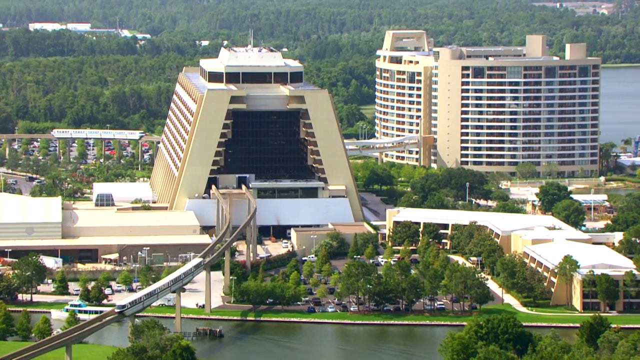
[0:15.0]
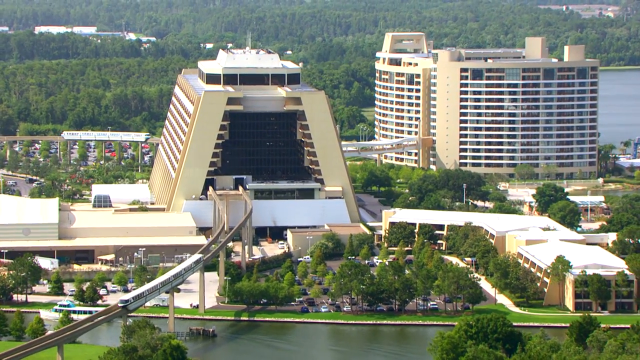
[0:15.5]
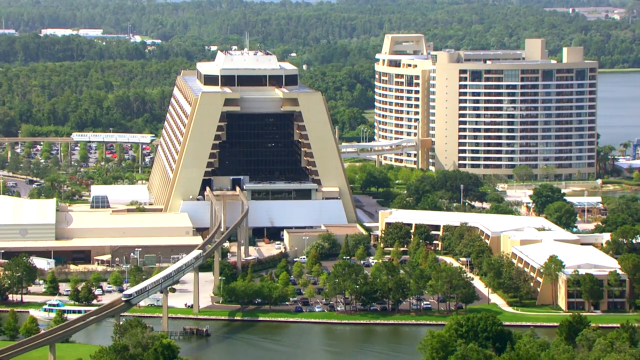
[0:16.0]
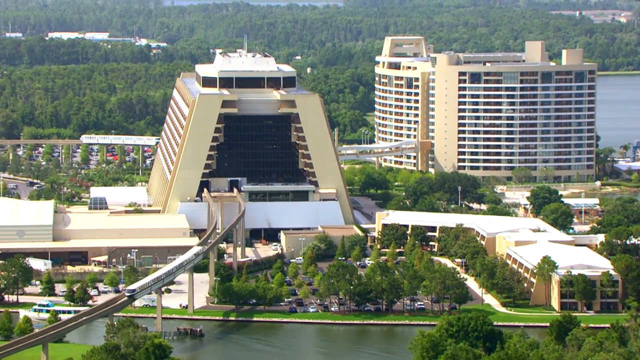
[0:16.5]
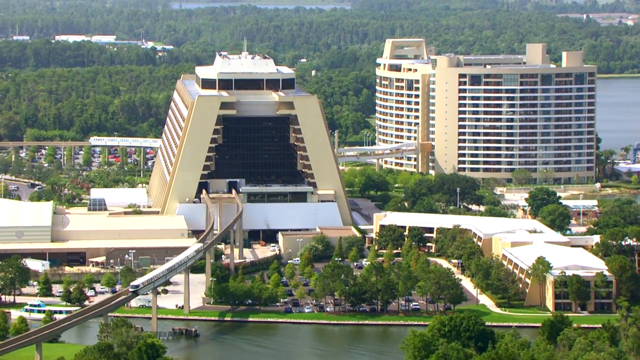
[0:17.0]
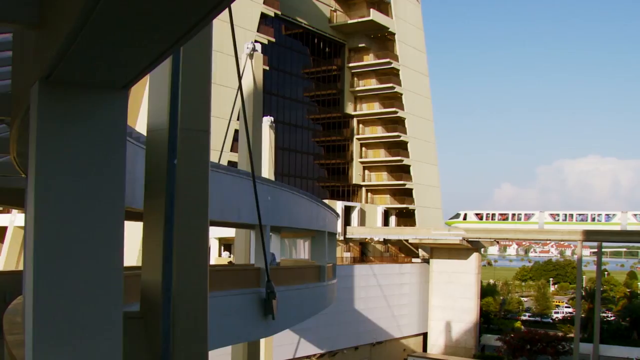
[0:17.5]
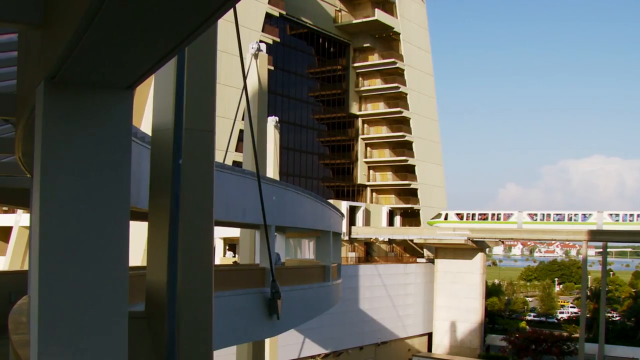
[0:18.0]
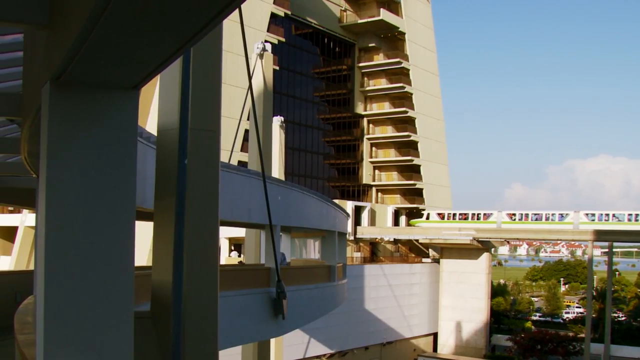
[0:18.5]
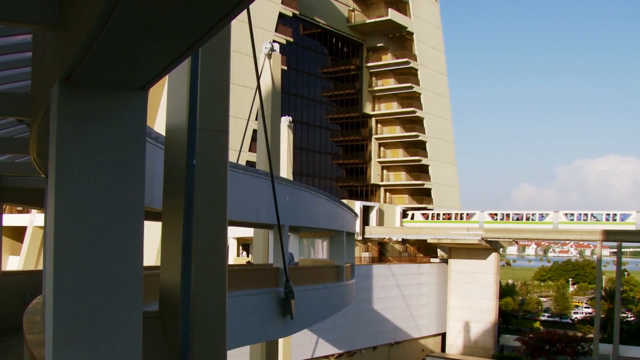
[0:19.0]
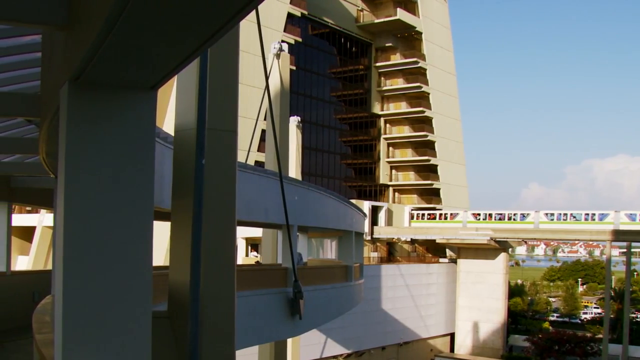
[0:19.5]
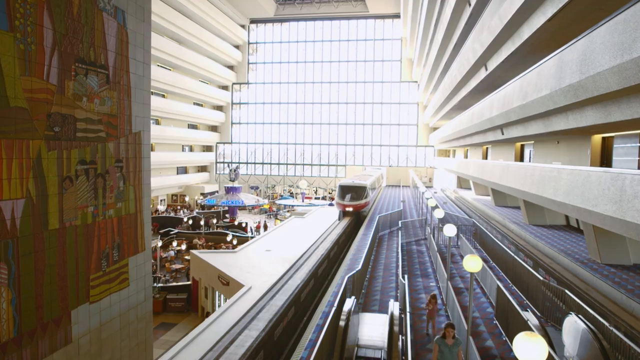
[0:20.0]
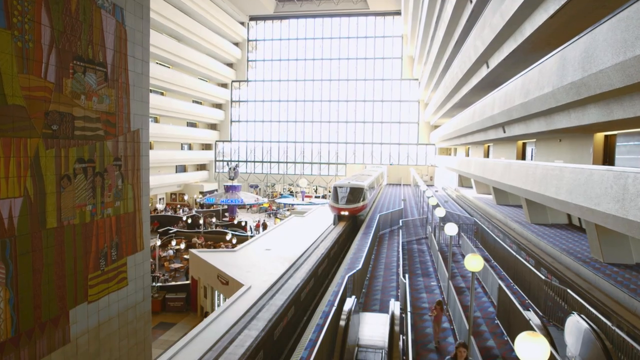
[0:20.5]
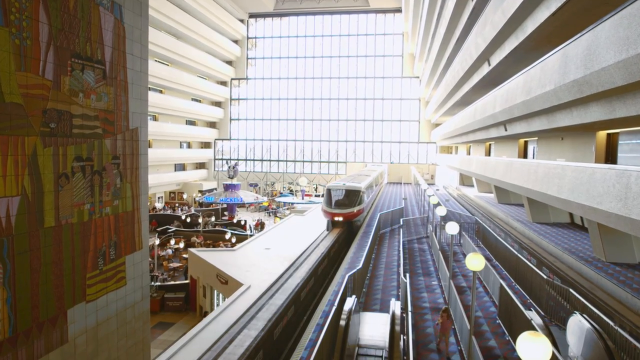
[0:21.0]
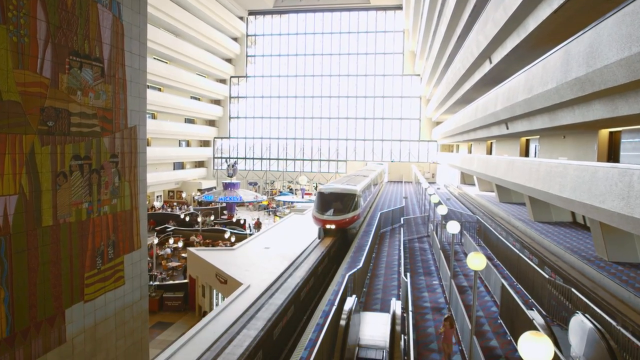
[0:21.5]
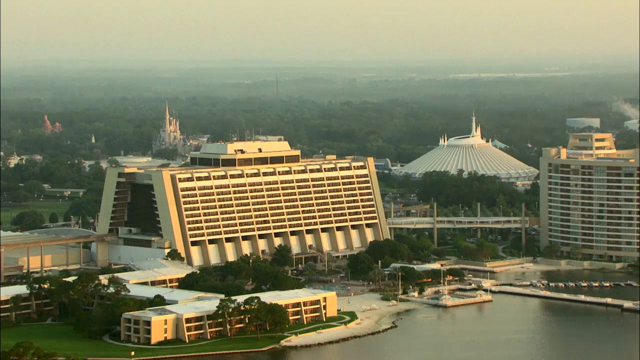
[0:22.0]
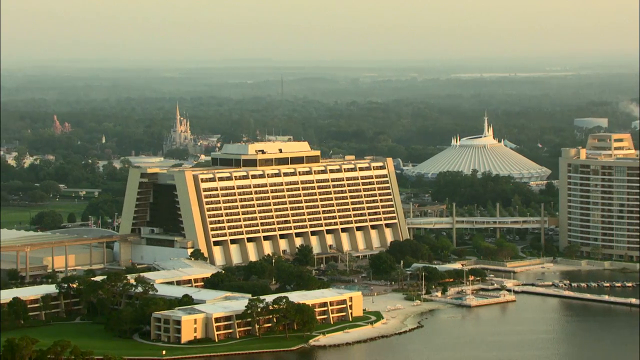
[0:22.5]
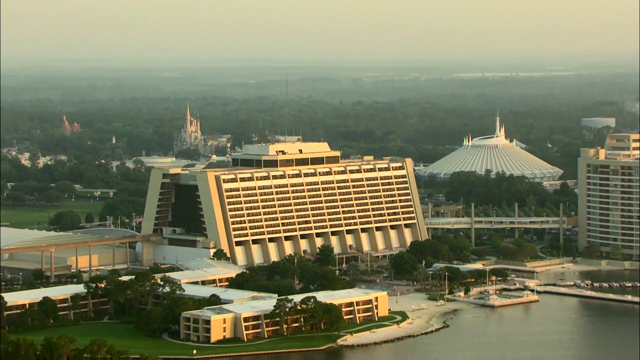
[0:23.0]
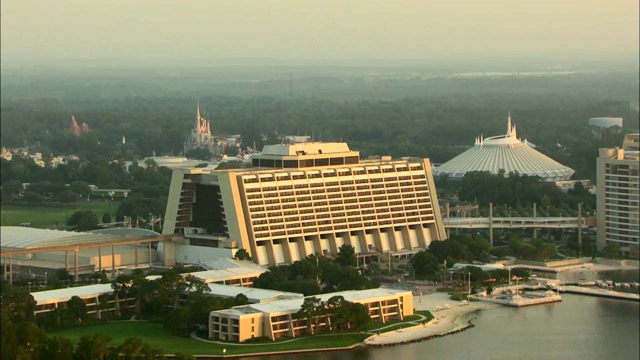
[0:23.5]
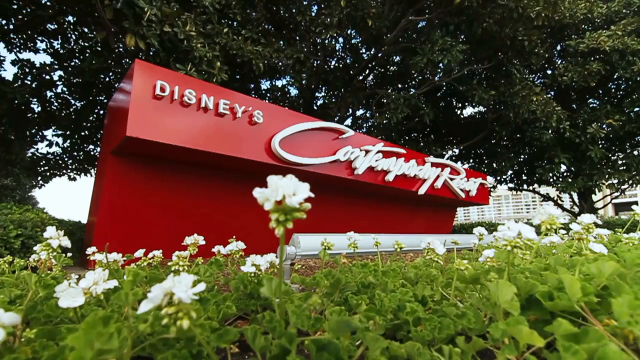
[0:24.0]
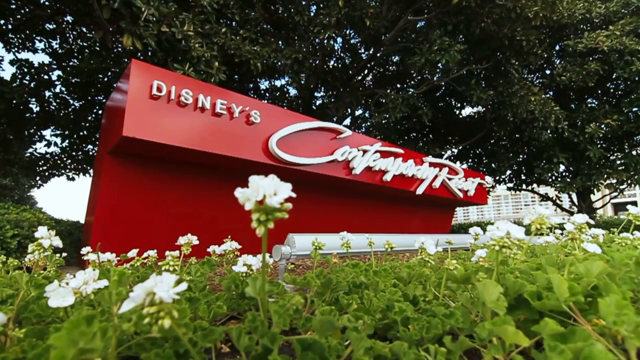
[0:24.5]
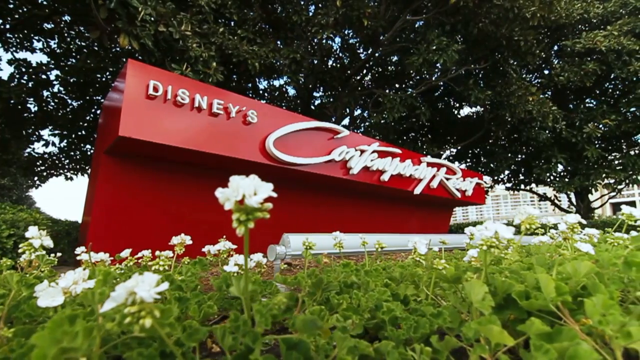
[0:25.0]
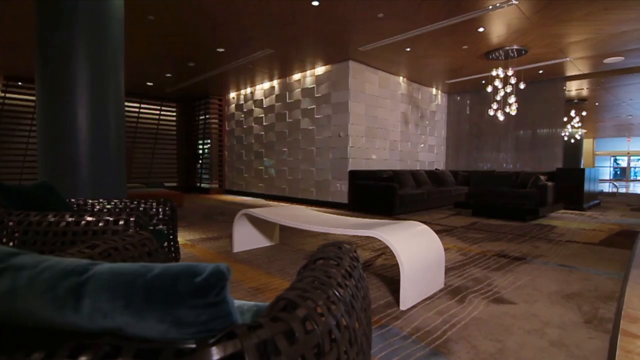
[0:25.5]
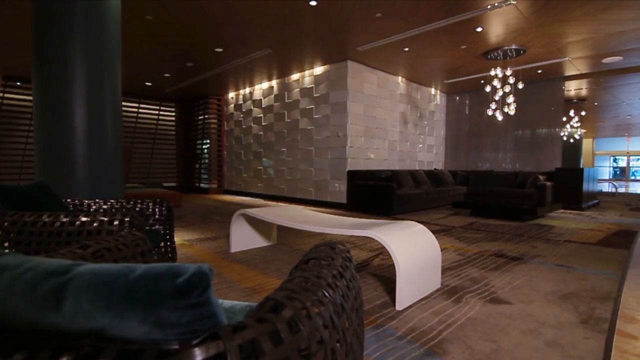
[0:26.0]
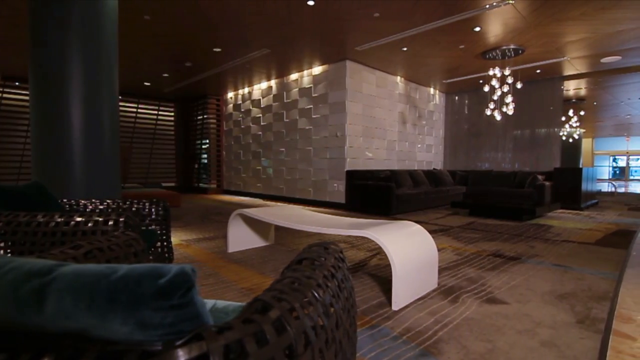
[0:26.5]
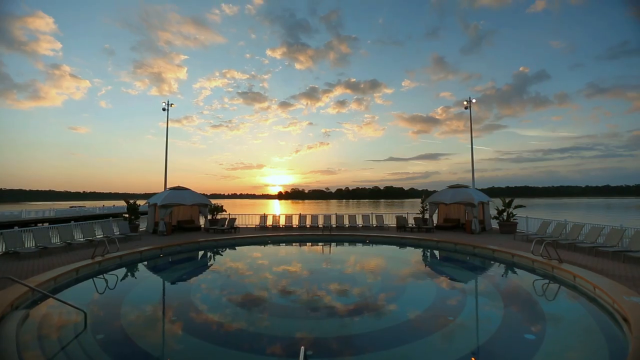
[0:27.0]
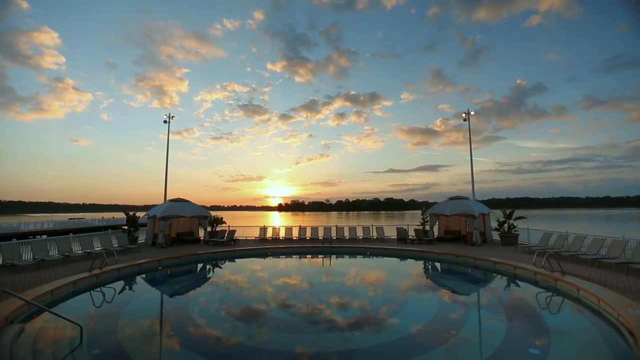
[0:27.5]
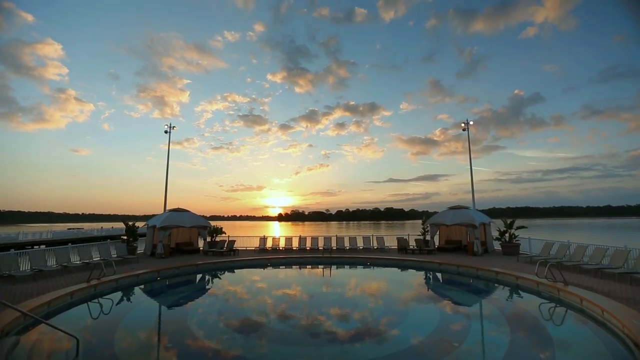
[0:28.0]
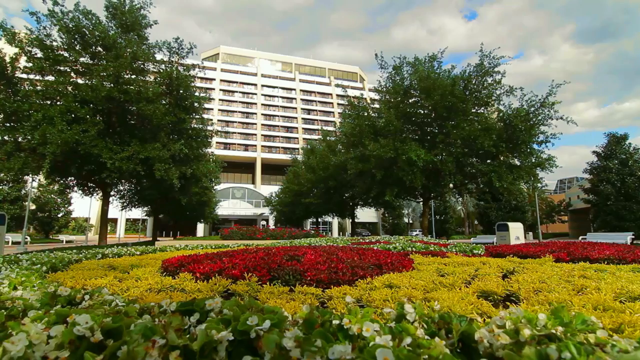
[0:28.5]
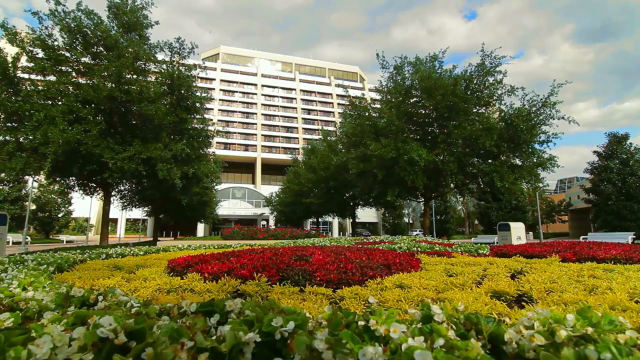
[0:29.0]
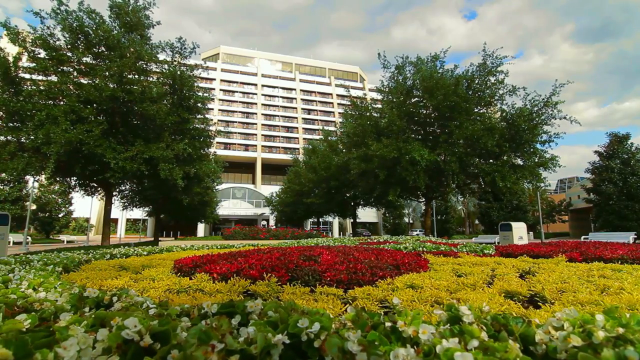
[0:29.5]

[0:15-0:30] Under the title "Disney's Contemporary Resort, Walt Disney World," an exterior shot of the resort shows the monorail along the left side going into the hotel. The video then moves to the hotel interior, where the monorail enters above the lobby. It then spans across the exterior of the resort along the water. A red block sign outside the resort reads in white letters "Disney's Contemporary Resort." Interior shots follow, including the lobby, the resort pool, and some of the gardens on the resort grounds. There are no other captions besides the title along the top of the video.